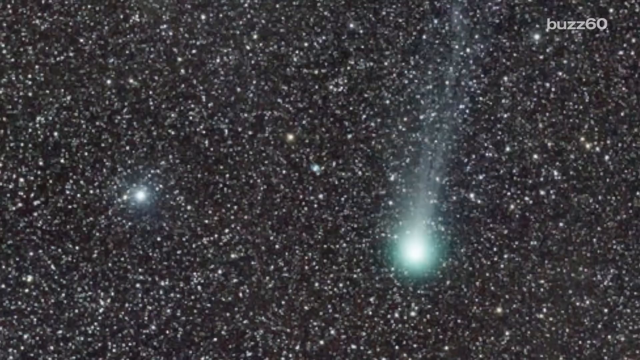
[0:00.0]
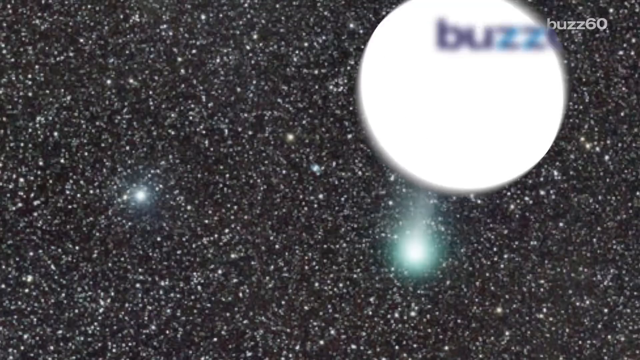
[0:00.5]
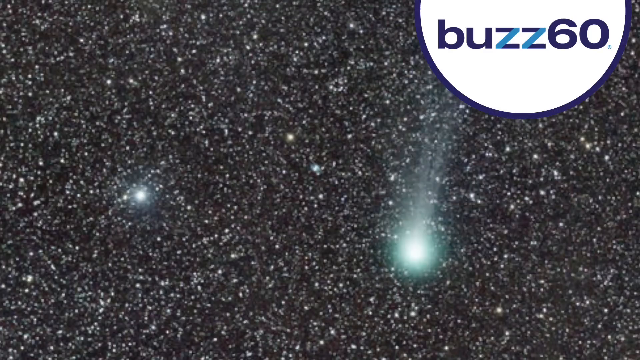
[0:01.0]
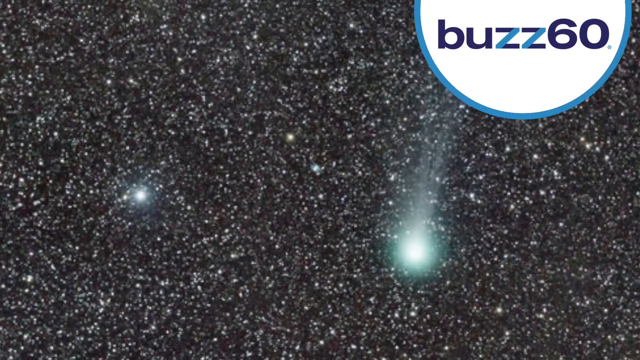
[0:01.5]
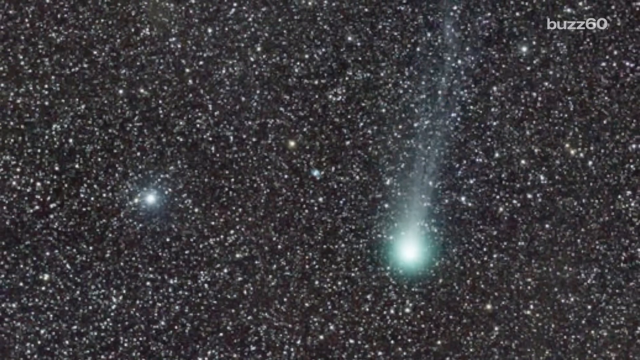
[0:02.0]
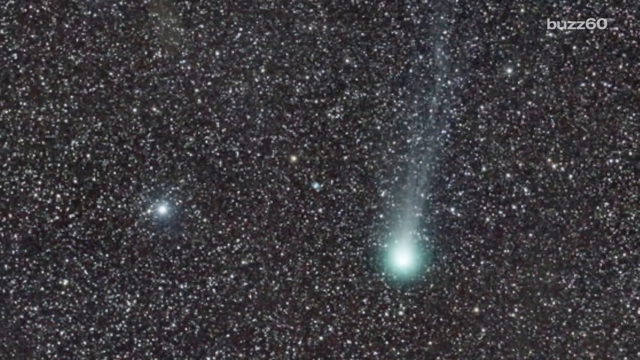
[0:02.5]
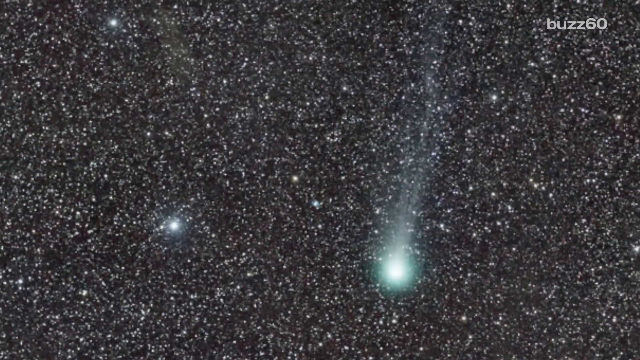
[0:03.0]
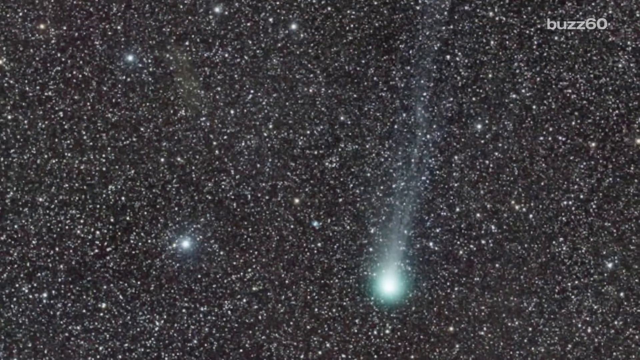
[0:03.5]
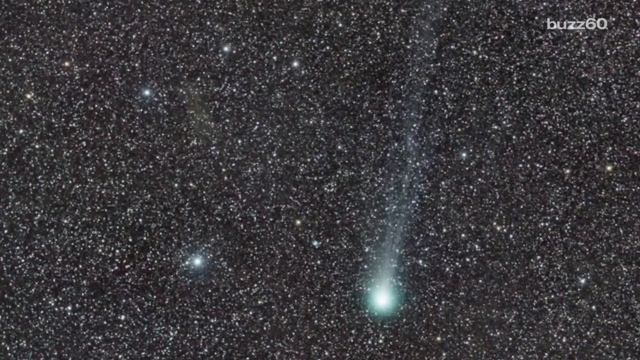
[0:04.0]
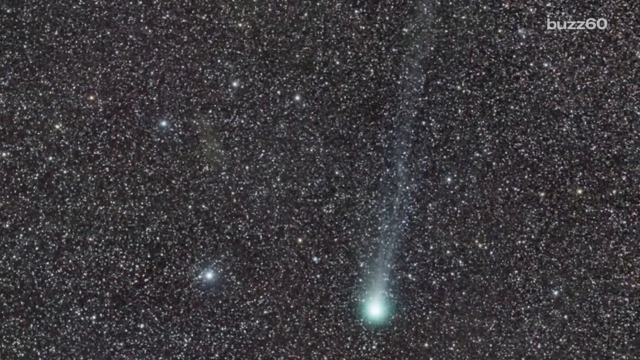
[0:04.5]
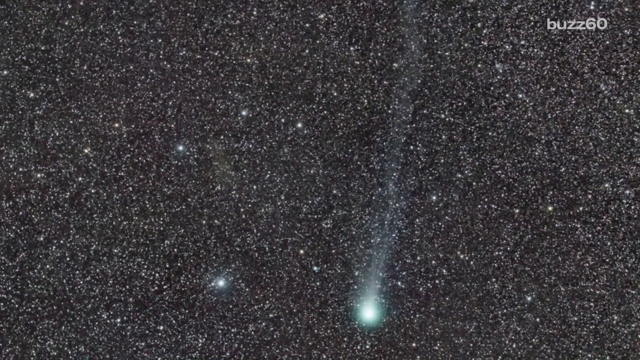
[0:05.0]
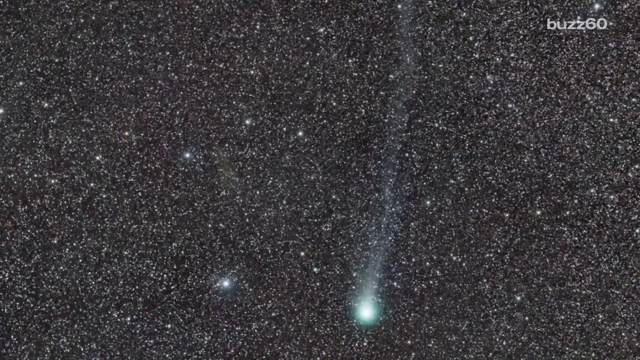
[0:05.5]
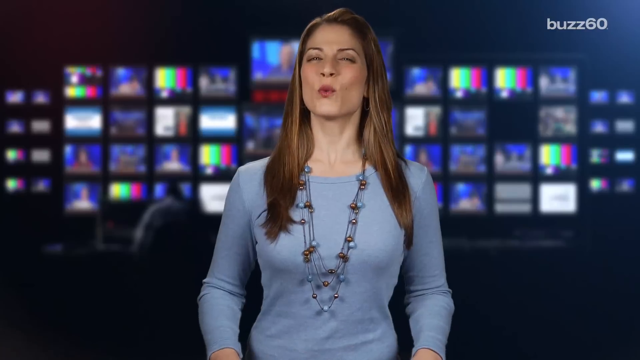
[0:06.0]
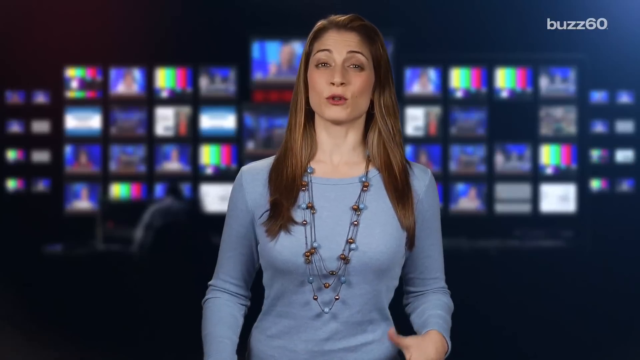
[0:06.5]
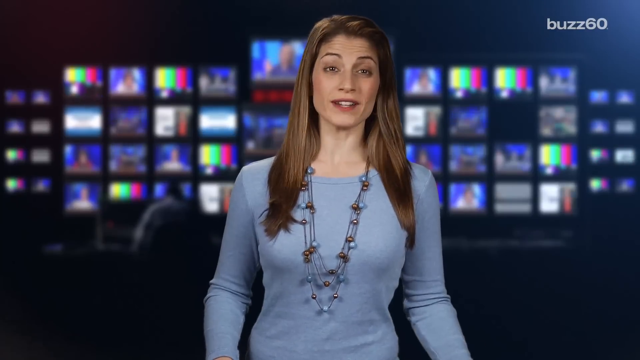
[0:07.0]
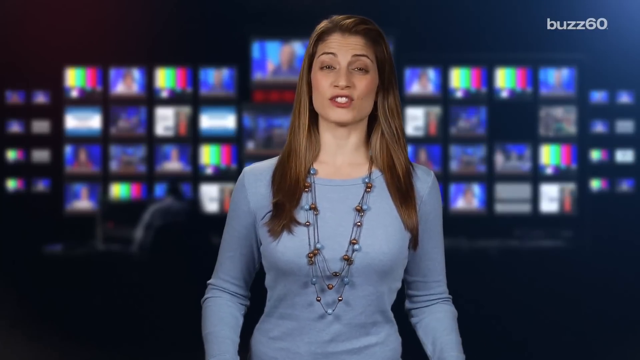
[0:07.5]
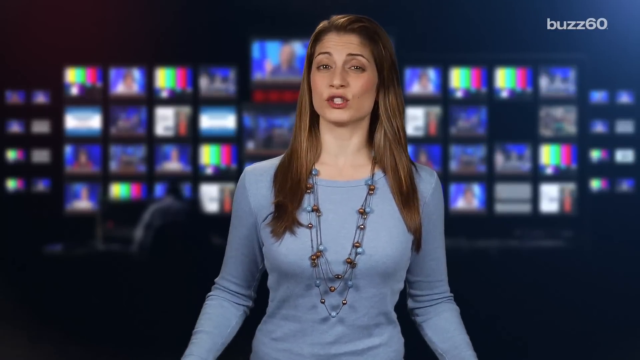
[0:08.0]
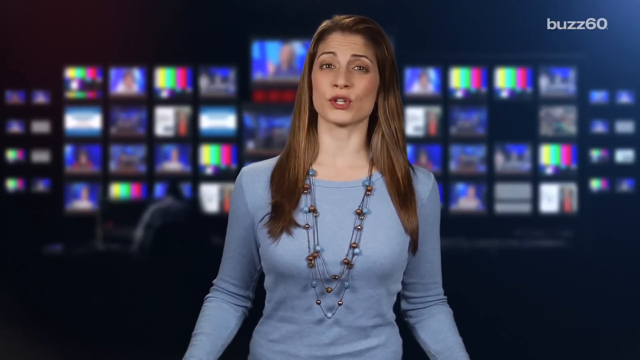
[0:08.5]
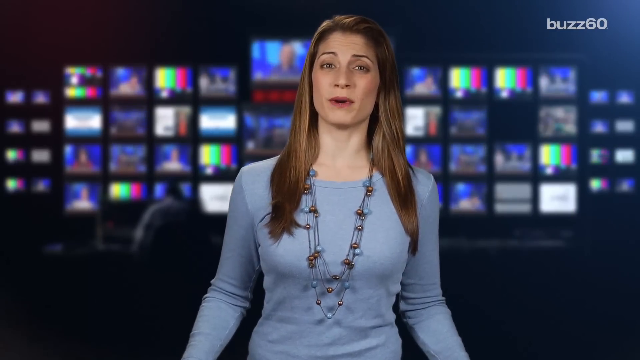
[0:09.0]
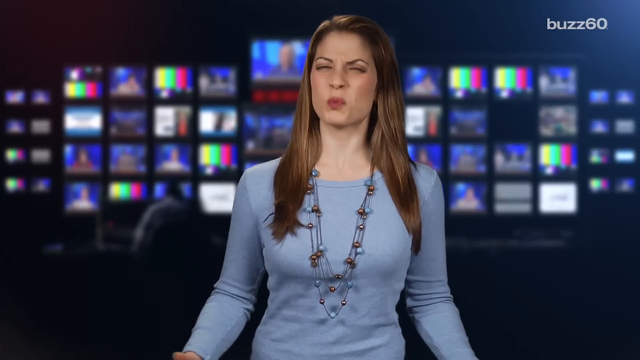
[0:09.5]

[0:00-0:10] A woman is talking, and behind her there is a lot of TV space. The room seems to be a multimedia room, possibly a newsroom or something similar. In the first part, there are a lot of colorful things and lights in the sky, possibly a star.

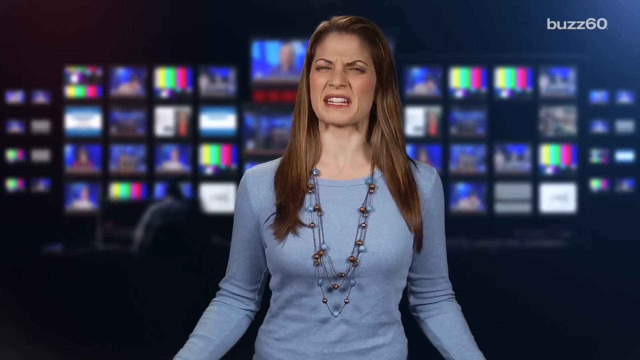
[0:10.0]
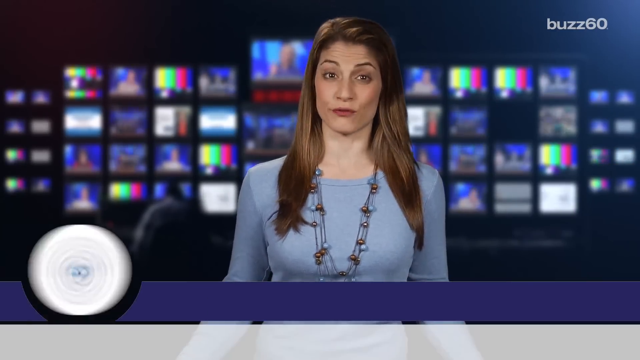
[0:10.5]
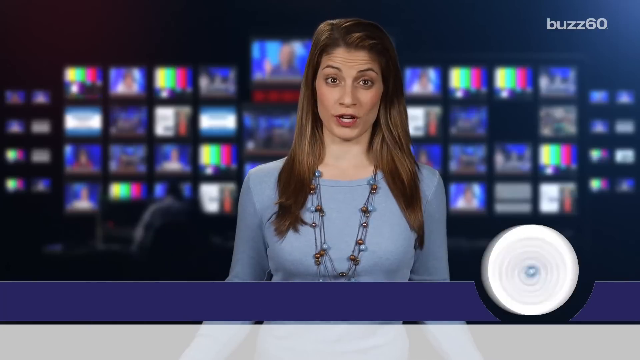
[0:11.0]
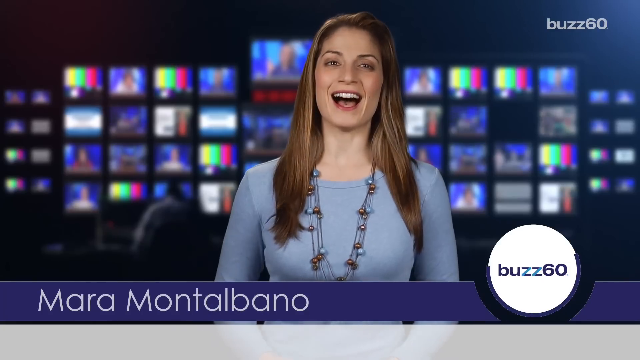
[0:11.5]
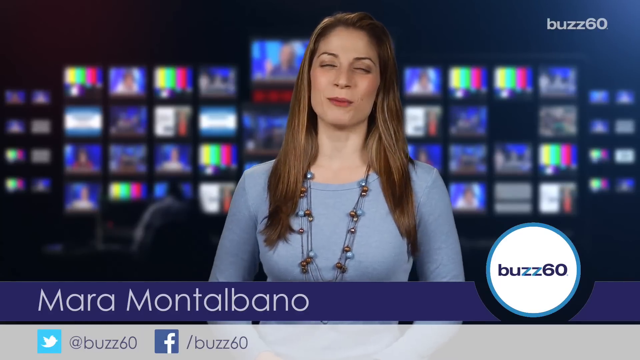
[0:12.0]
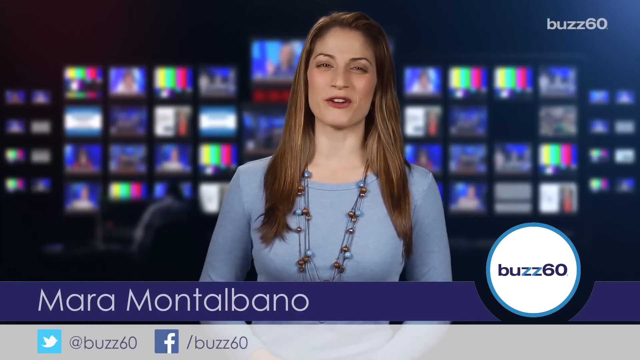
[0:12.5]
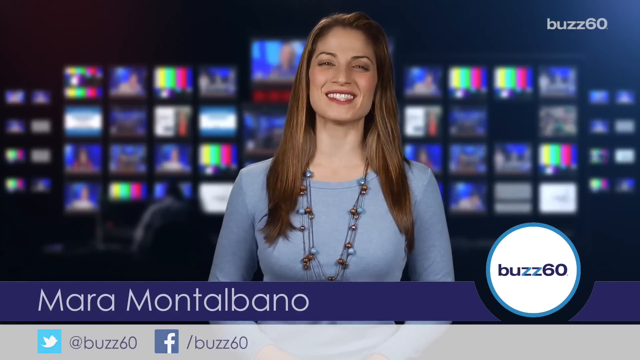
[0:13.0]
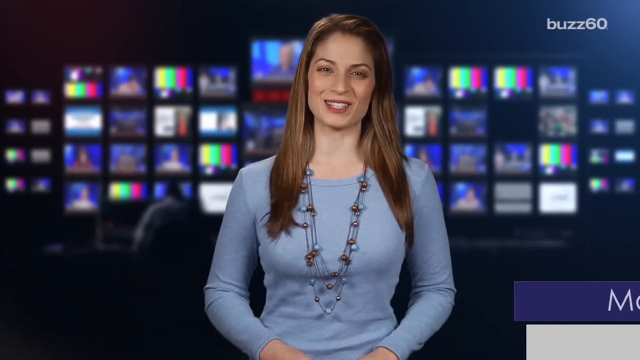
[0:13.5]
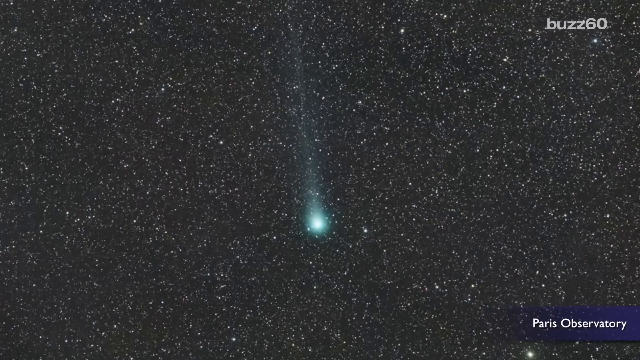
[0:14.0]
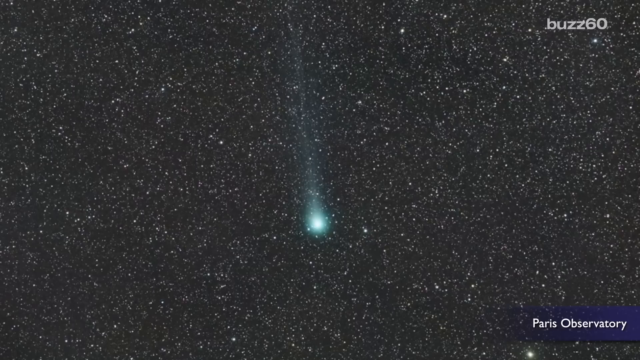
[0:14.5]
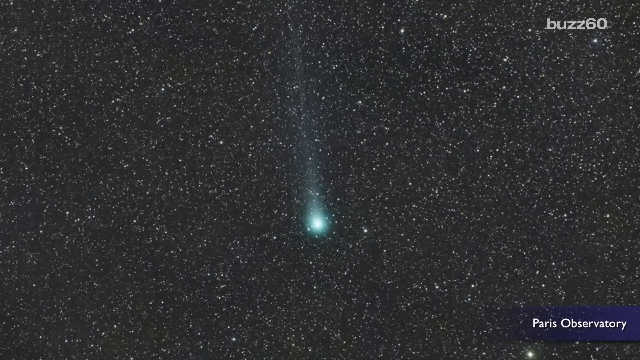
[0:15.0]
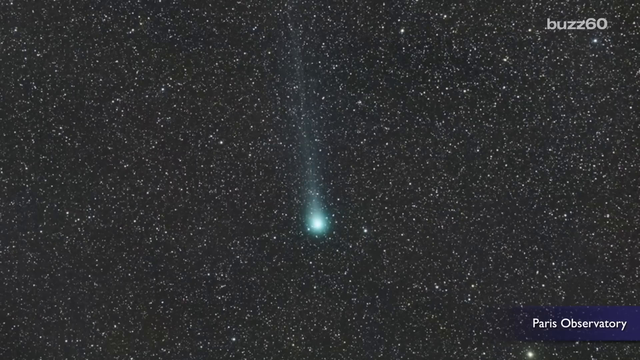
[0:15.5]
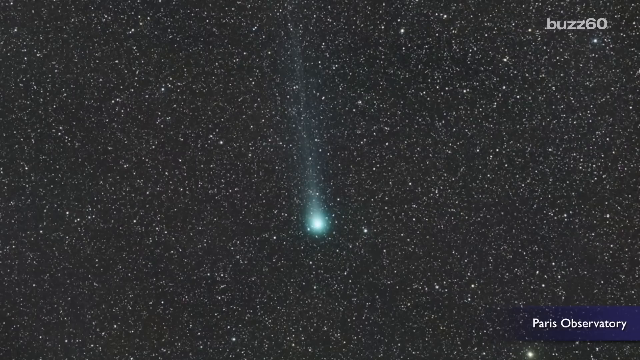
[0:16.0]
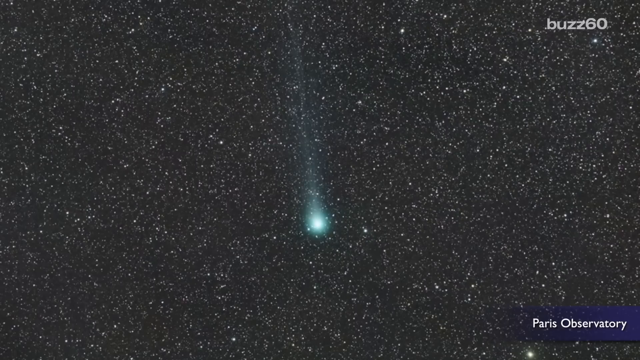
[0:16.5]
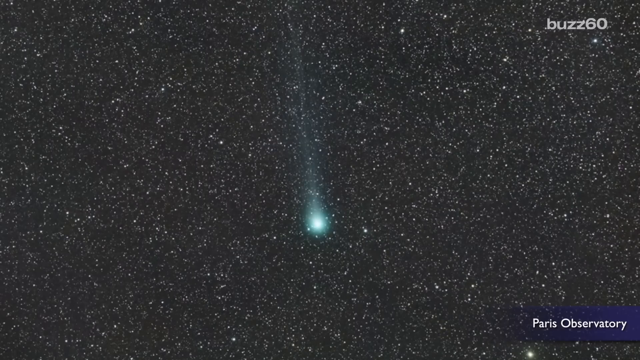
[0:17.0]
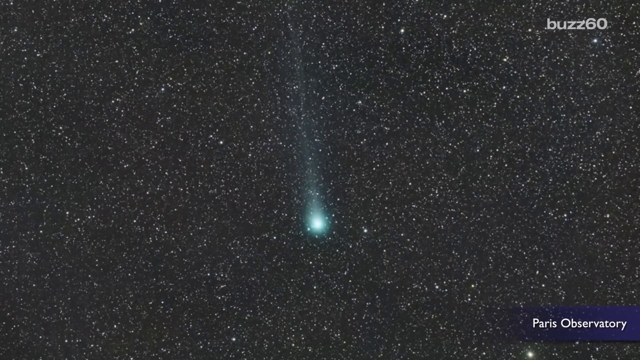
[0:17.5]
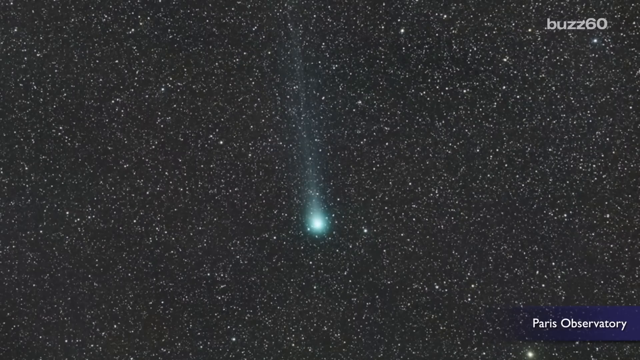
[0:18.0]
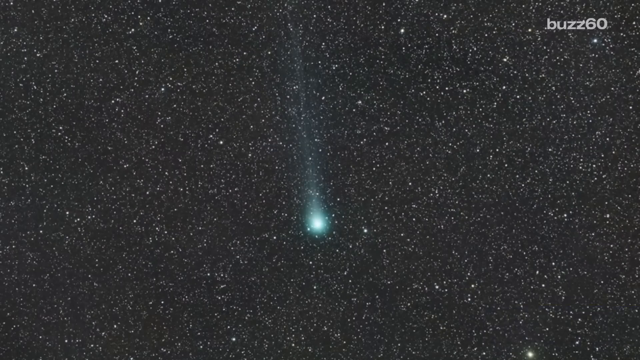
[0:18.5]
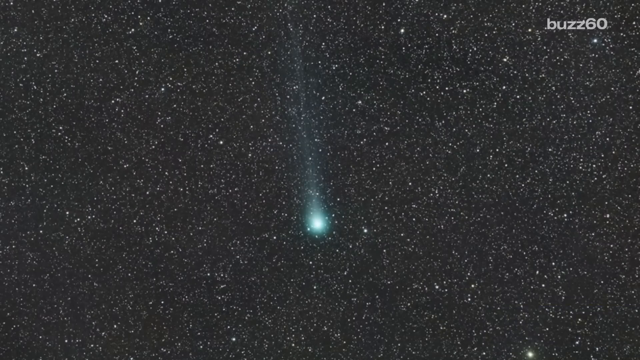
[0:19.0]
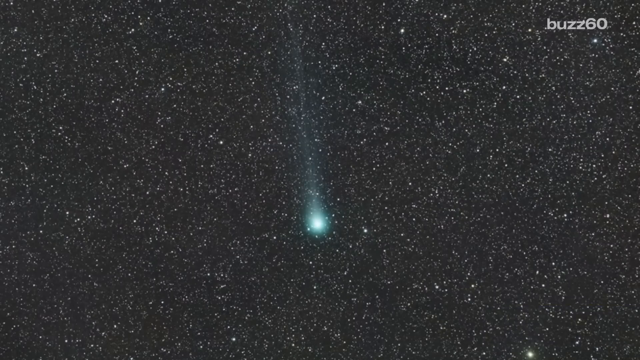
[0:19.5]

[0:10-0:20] The person's name is Maram Dalbana. A picture shows something falling down from the sky, with a lot of lights. The person delivering the speech wears a full long T-shirt and a necklace and has brown hair.